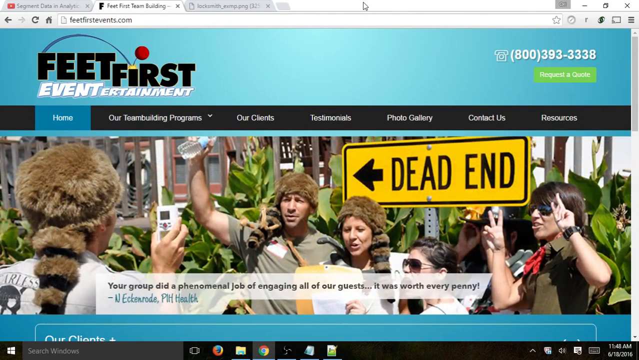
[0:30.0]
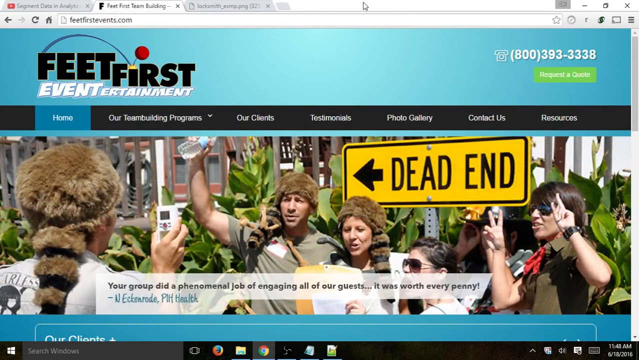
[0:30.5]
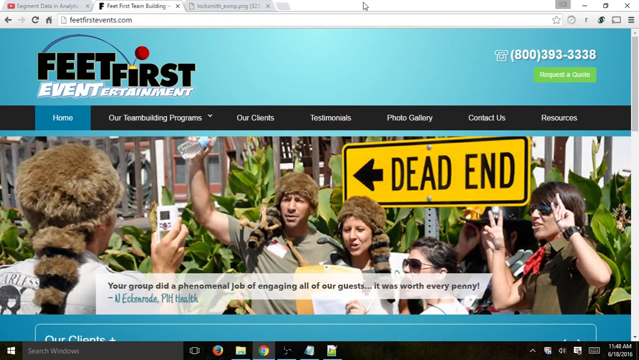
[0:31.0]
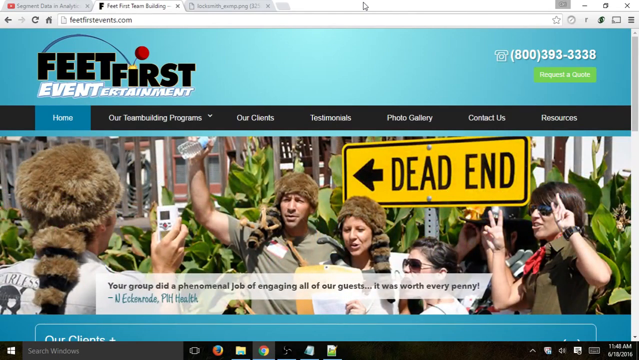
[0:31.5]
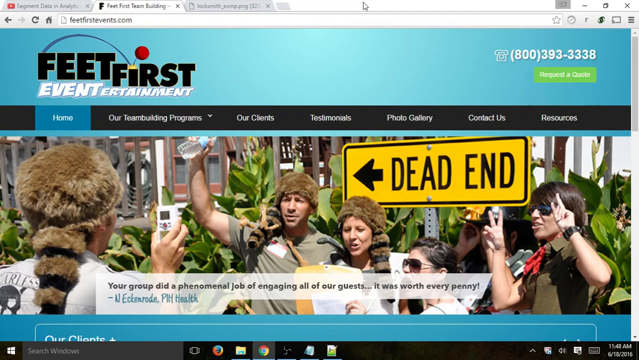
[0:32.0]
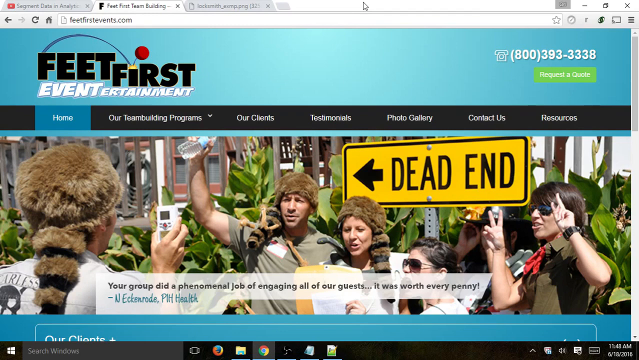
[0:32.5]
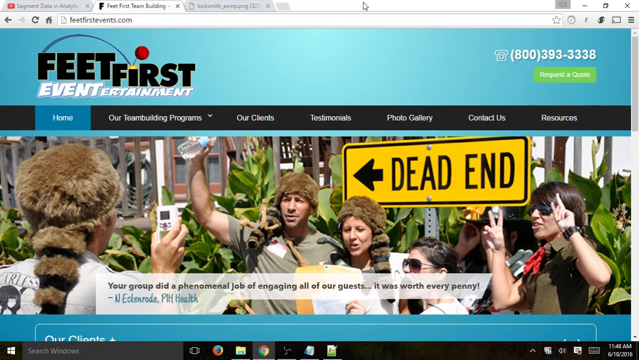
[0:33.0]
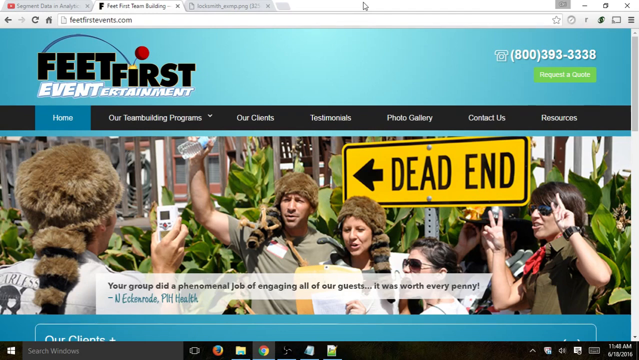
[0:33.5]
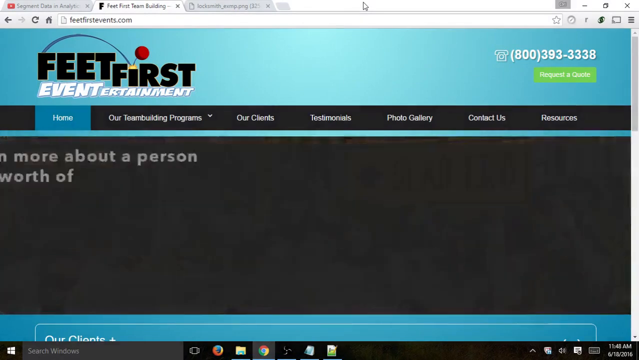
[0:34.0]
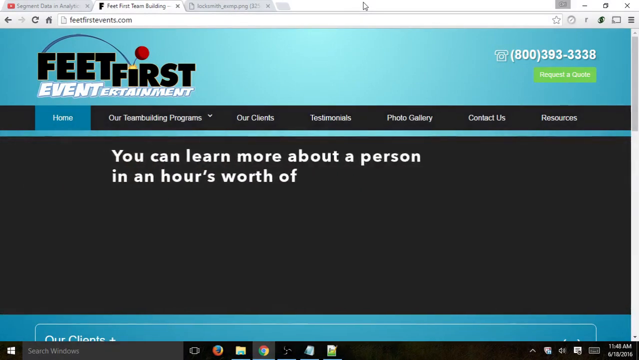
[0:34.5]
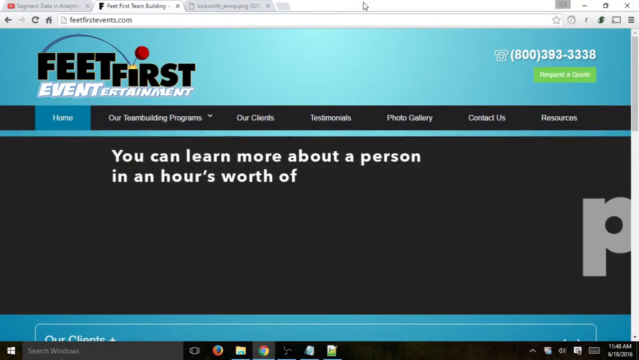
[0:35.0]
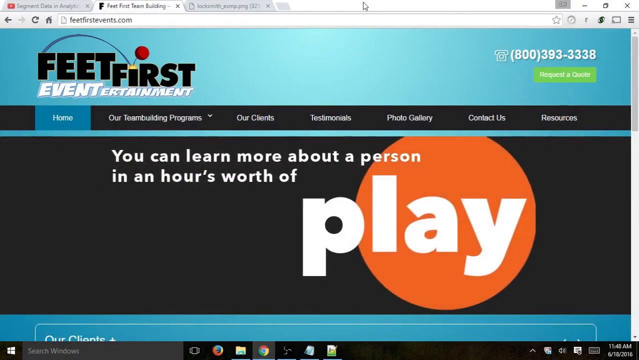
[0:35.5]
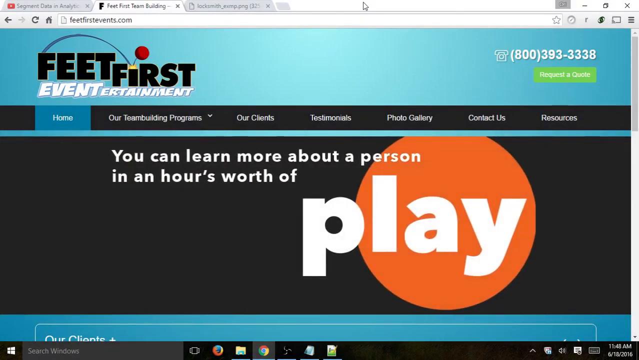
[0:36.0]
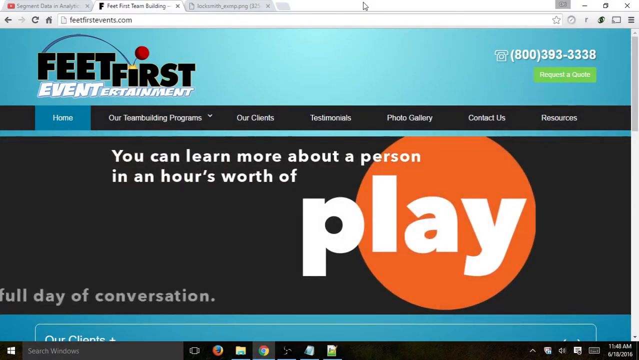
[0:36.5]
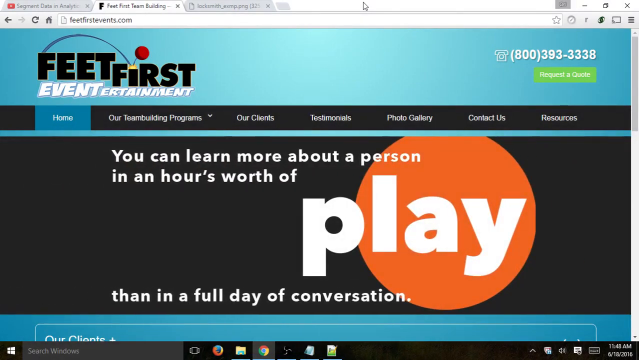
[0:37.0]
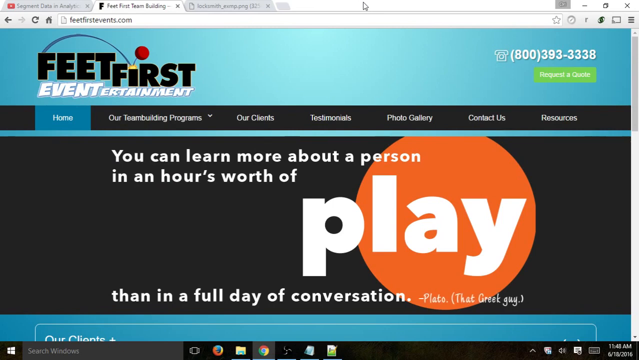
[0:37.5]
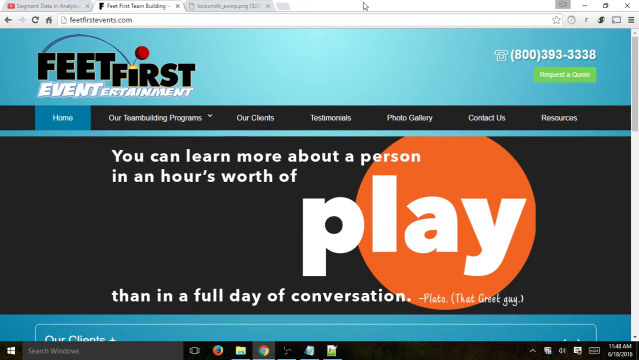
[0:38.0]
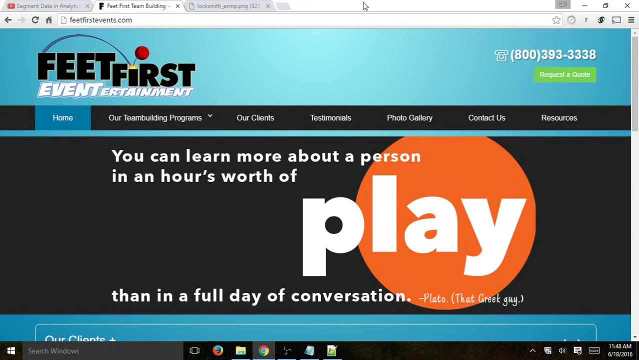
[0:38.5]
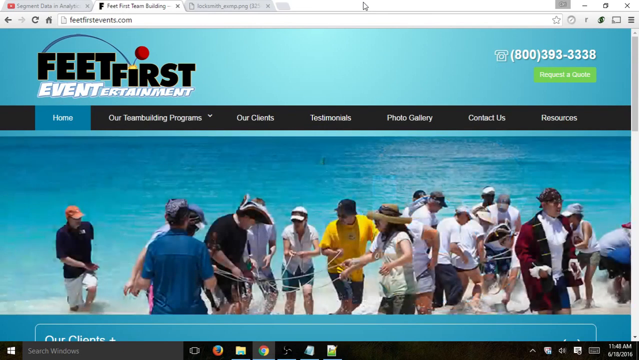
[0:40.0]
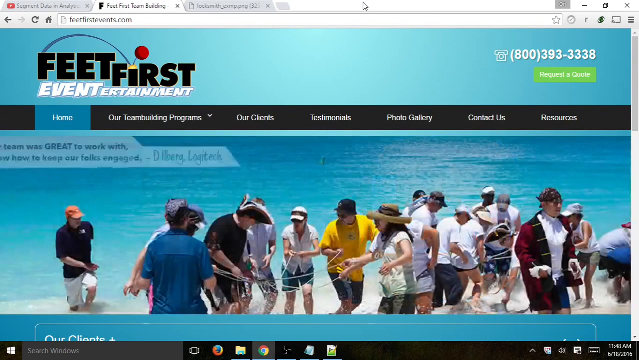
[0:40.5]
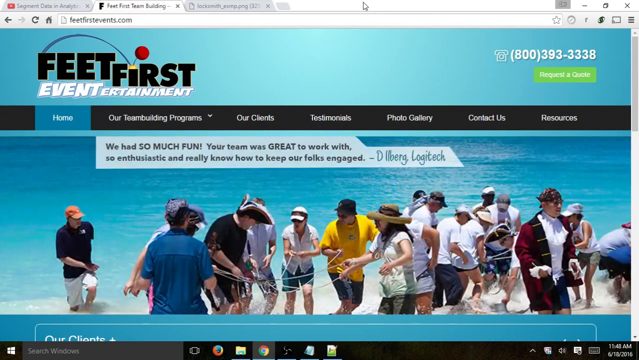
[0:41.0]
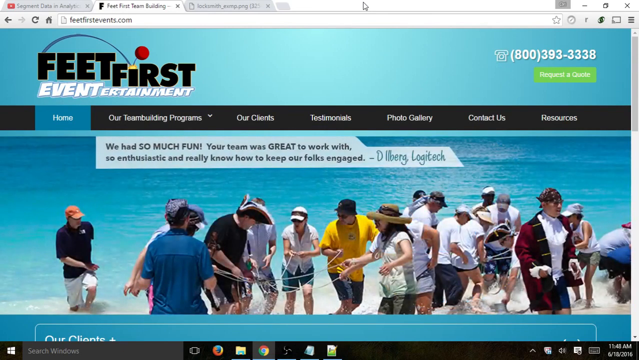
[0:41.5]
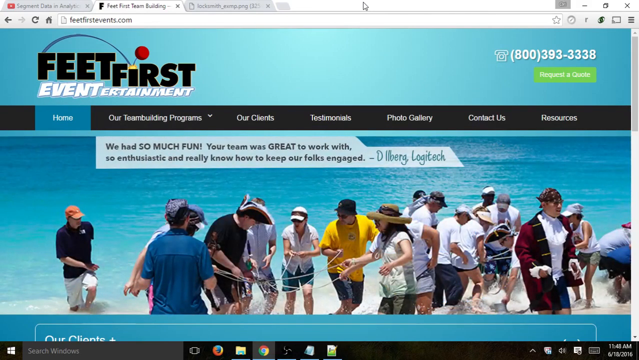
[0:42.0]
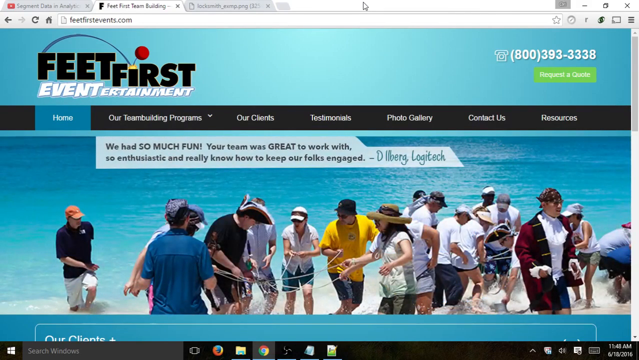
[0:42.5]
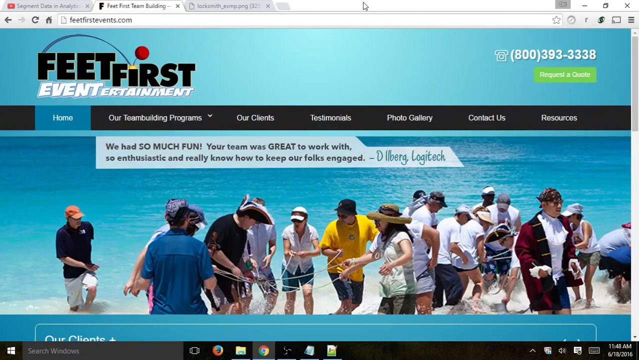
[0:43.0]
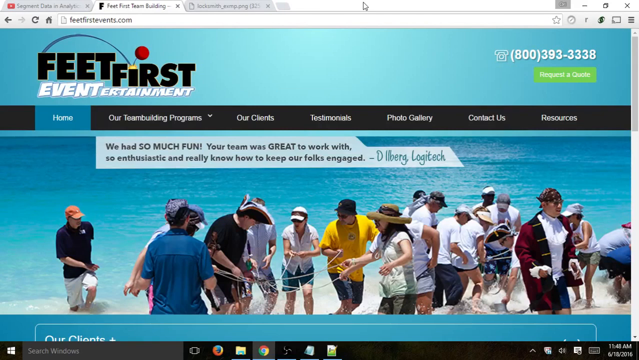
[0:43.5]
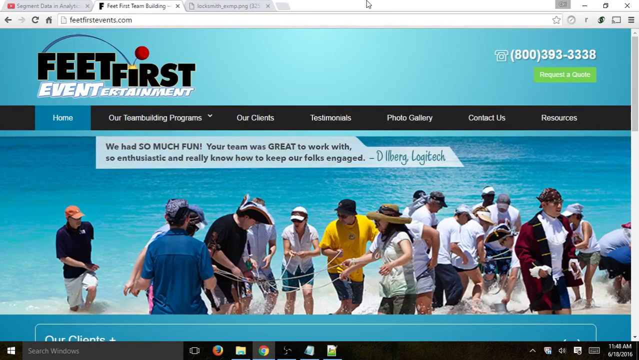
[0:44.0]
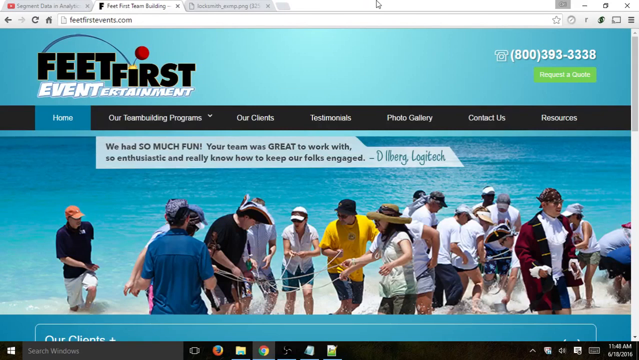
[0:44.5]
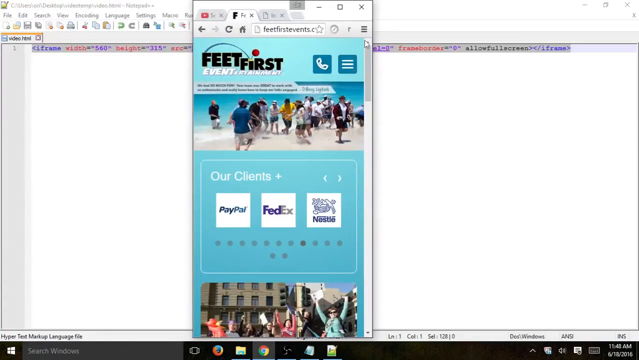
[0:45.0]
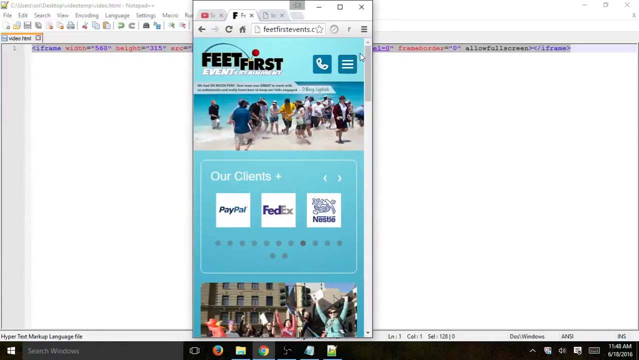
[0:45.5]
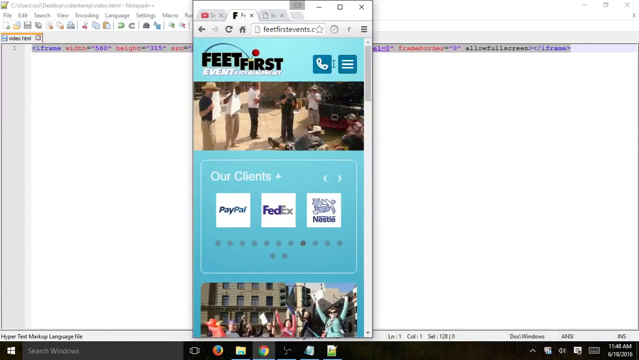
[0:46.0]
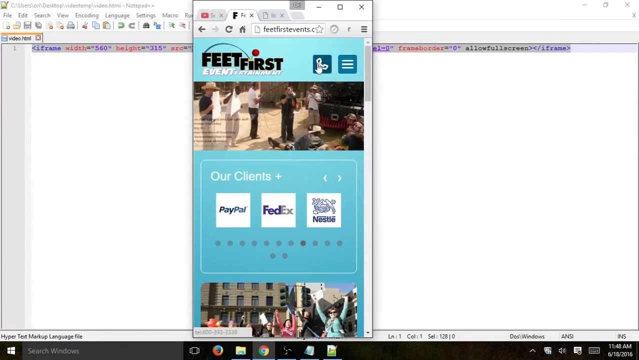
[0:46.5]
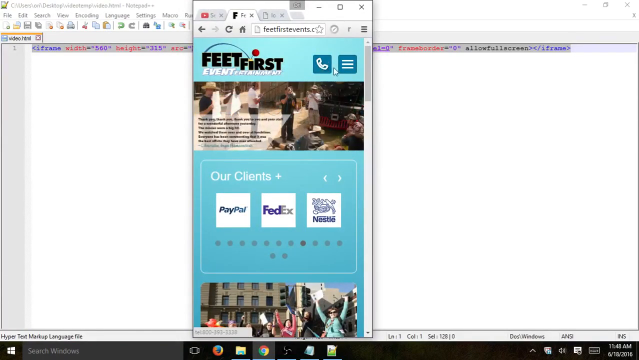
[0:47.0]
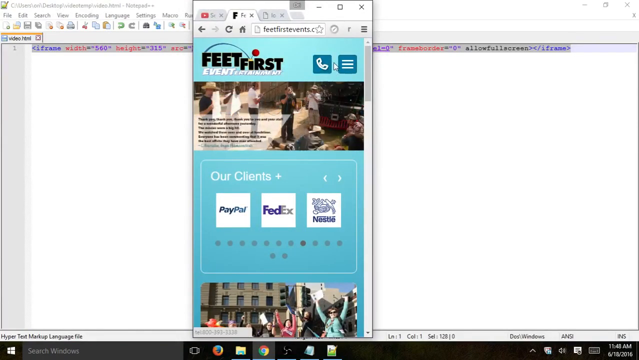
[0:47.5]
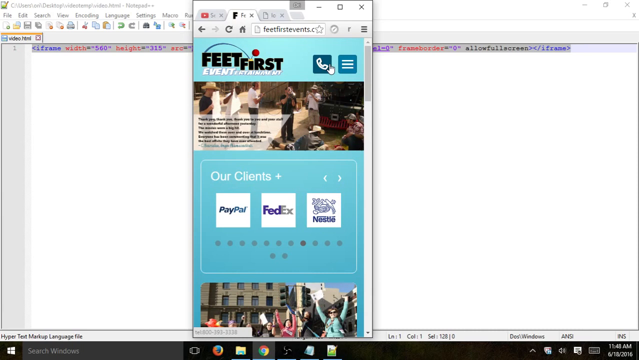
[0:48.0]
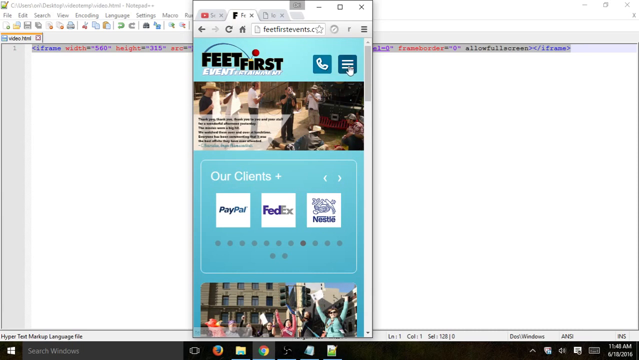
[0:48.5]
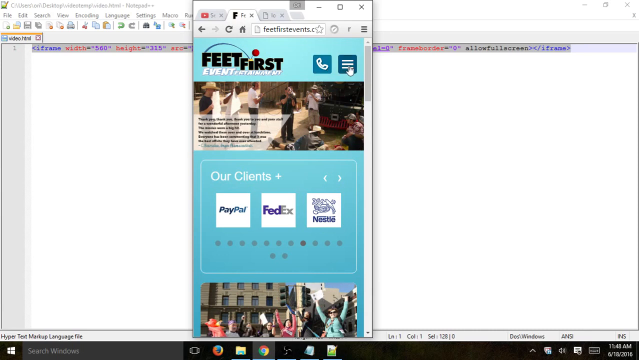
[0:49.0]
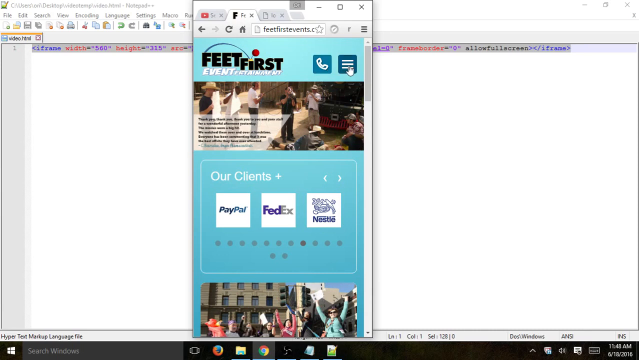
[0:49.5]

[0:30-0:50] A black slide shows the quote "you can learn more about a person in an hour's worth of play than in a full day of conversation." The upper bar, with home, our clients and other items, is now also black, with a black background and white letters. "Play" is in very large letters, with an orange circle behind the "lay" of play. The quote is attributed to Plato, with "that Greek guy" in parentheses, presumably Plato the philosopher. It then shifts back to the first image of people making rope ladders. Finally, the web browser window is shown non-maximized, with a Notepad++ window behind it.